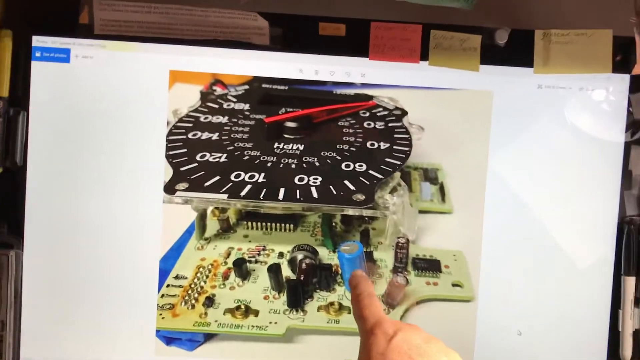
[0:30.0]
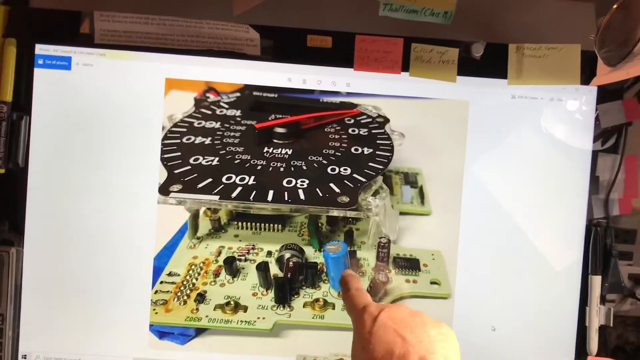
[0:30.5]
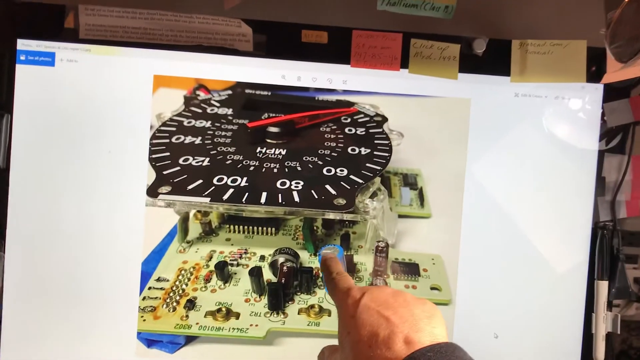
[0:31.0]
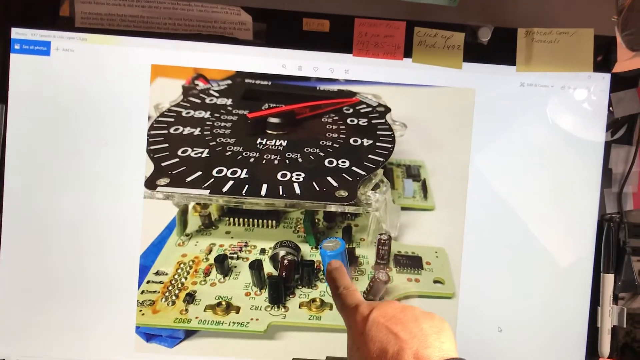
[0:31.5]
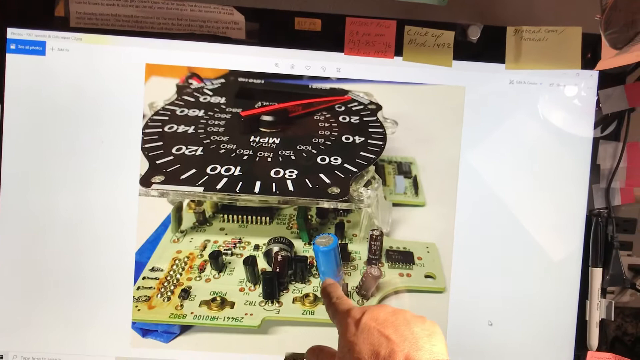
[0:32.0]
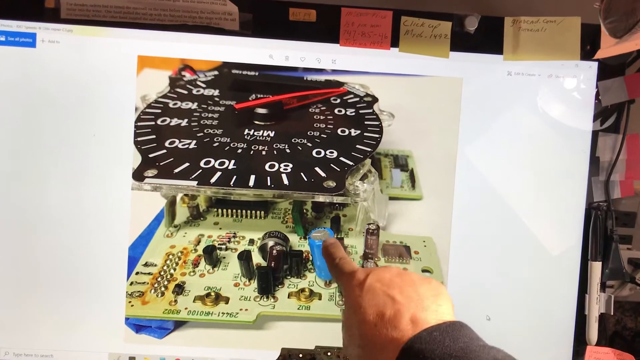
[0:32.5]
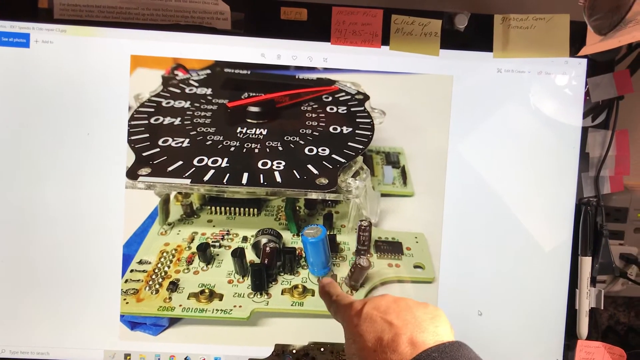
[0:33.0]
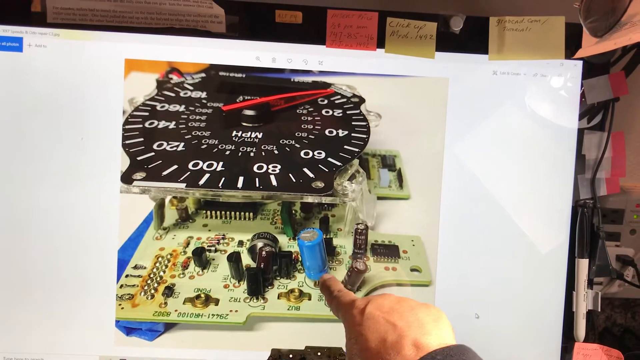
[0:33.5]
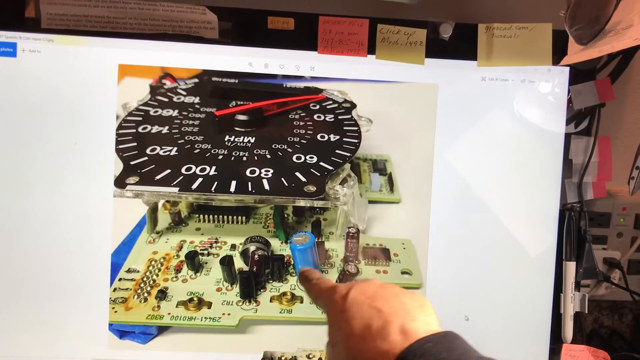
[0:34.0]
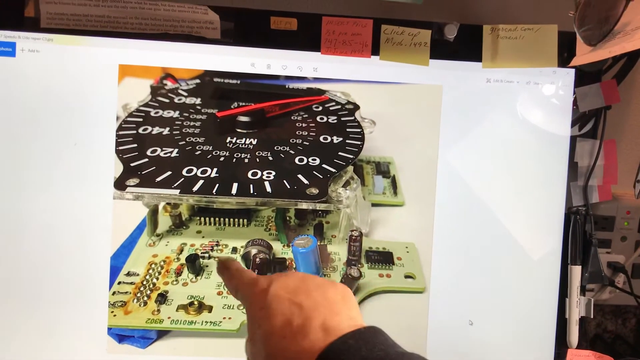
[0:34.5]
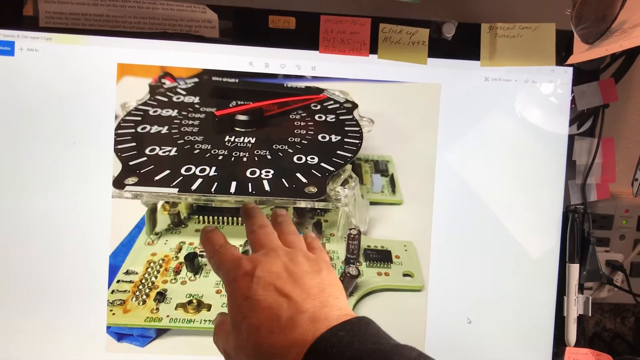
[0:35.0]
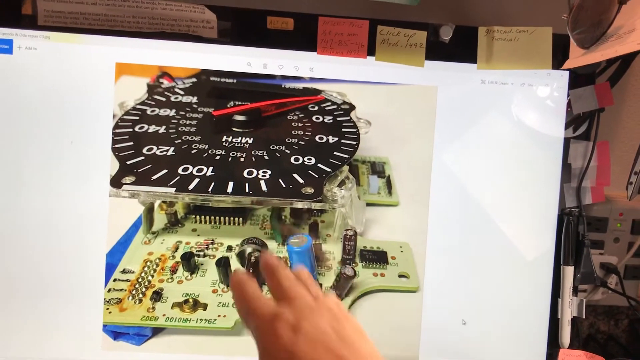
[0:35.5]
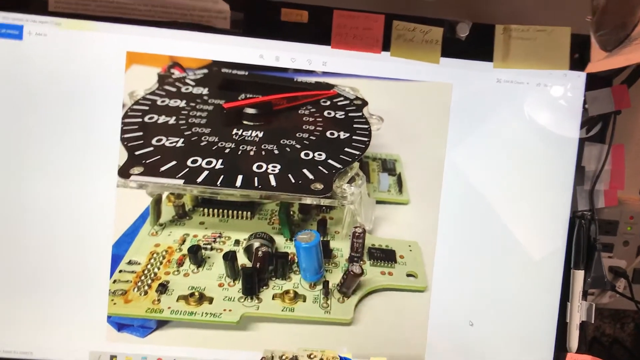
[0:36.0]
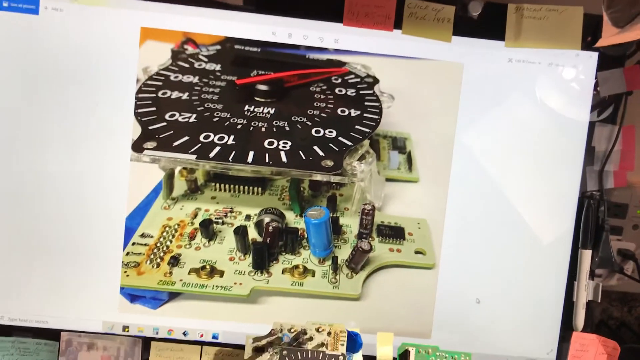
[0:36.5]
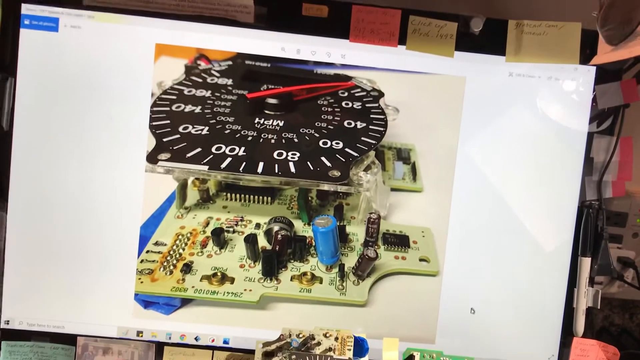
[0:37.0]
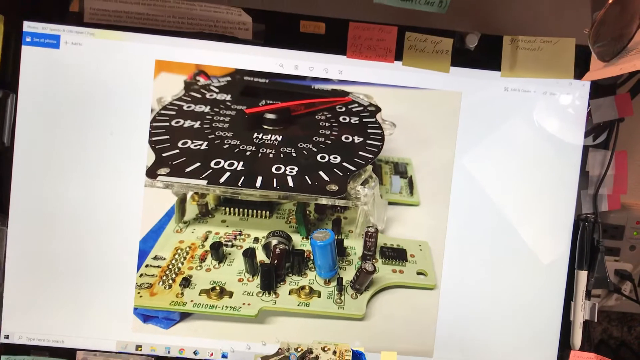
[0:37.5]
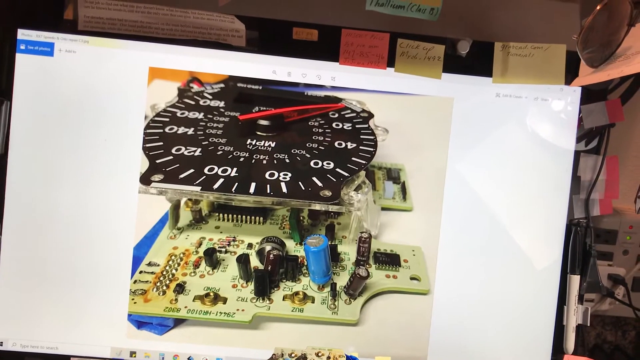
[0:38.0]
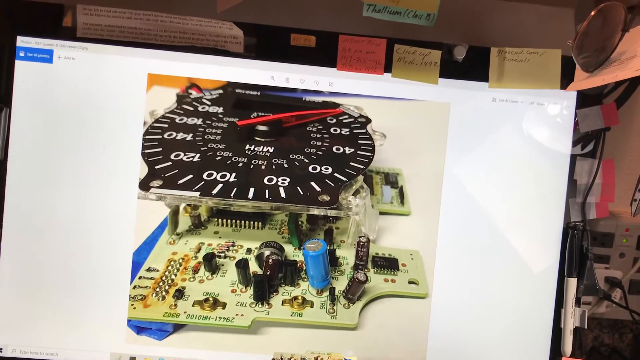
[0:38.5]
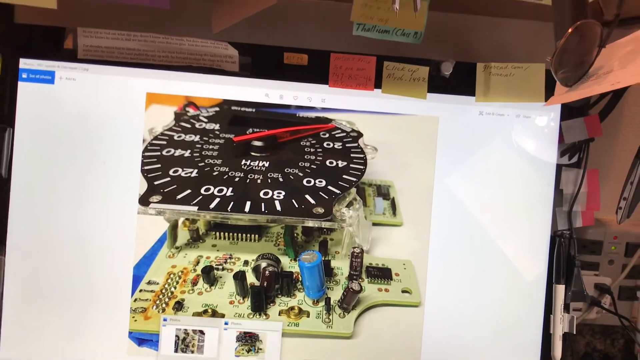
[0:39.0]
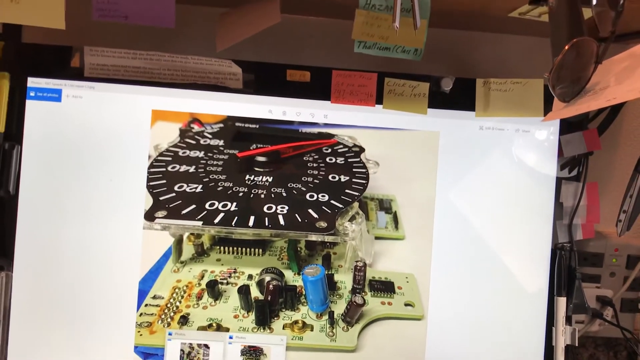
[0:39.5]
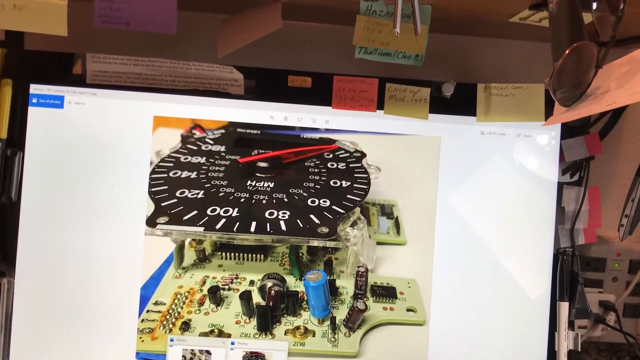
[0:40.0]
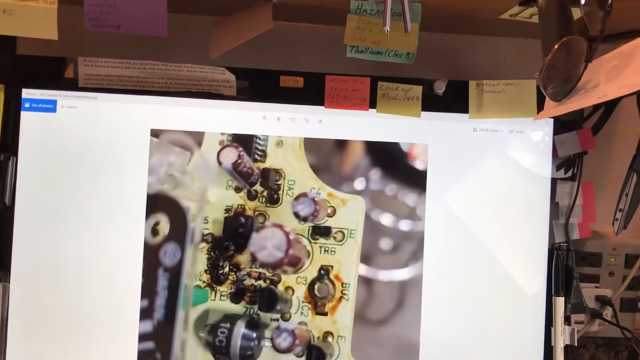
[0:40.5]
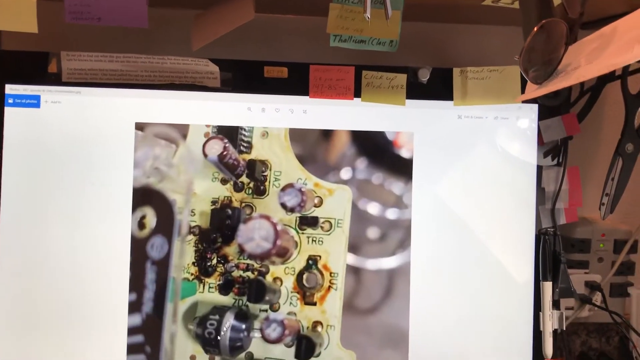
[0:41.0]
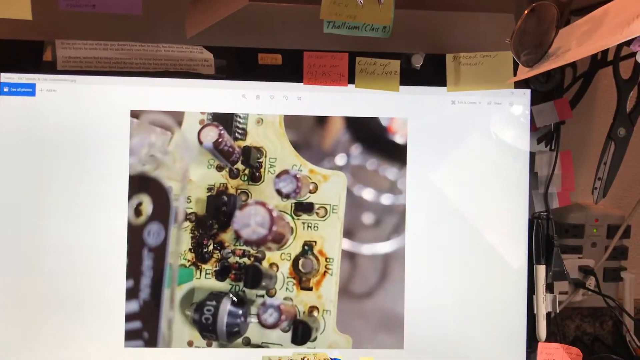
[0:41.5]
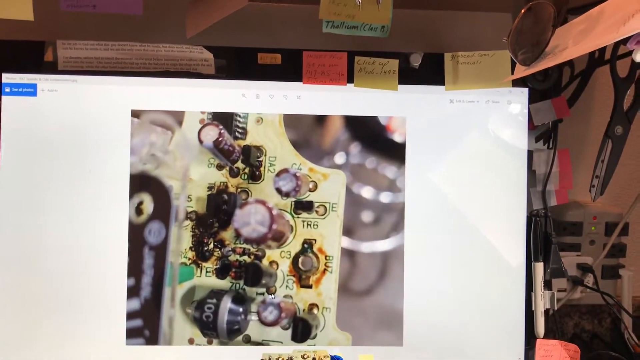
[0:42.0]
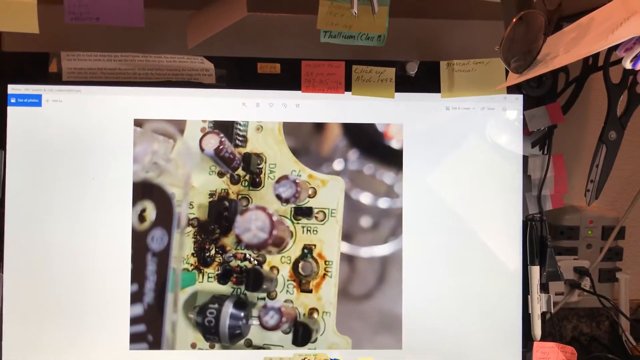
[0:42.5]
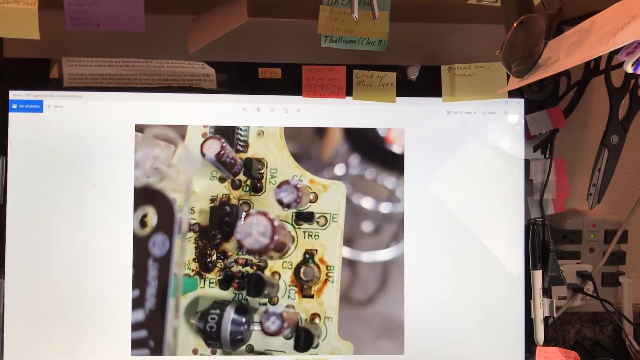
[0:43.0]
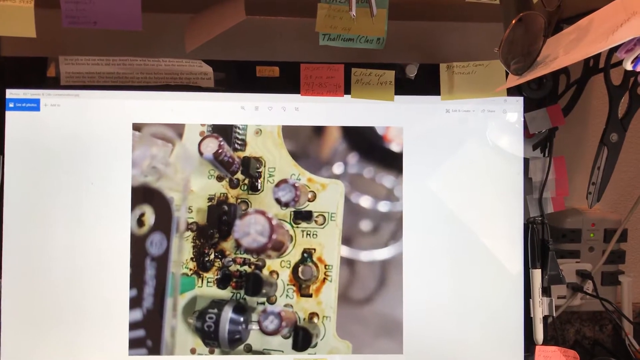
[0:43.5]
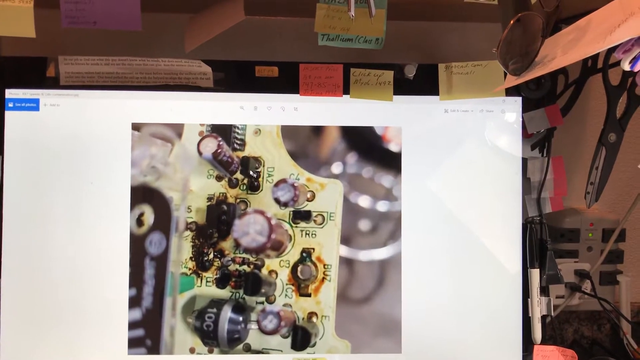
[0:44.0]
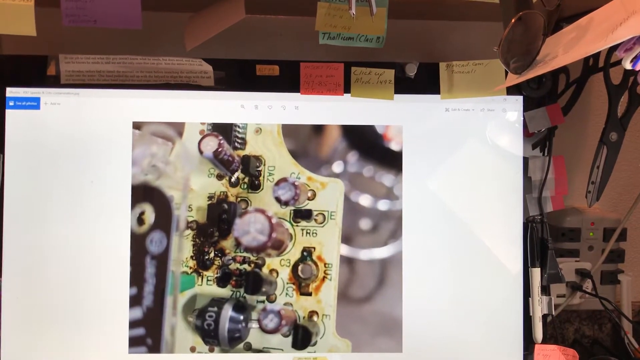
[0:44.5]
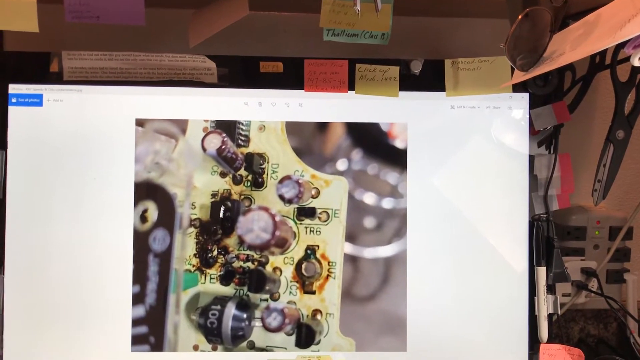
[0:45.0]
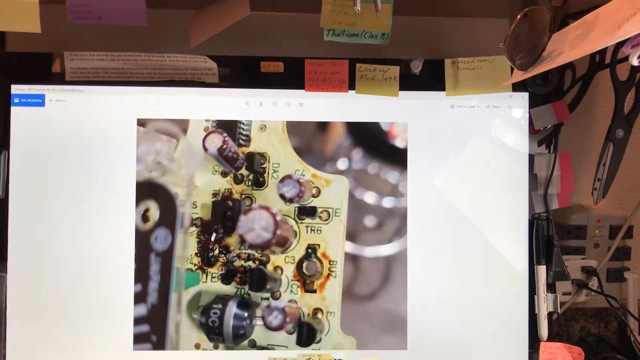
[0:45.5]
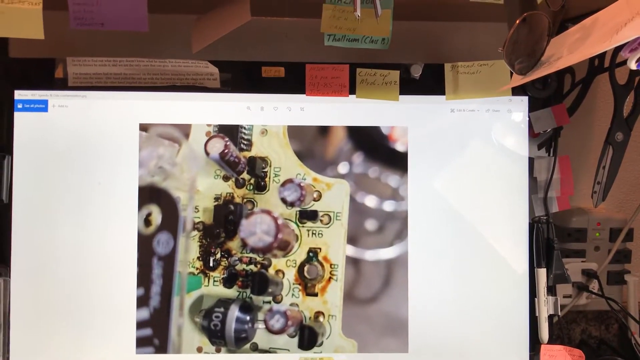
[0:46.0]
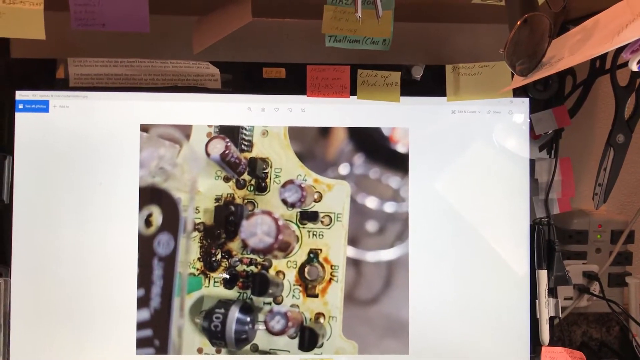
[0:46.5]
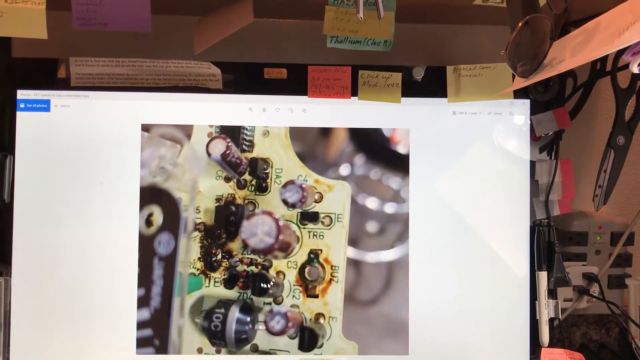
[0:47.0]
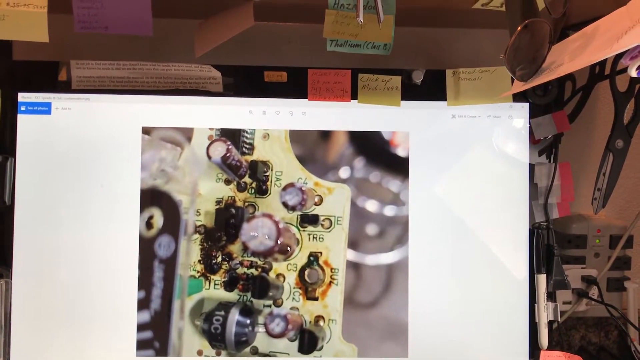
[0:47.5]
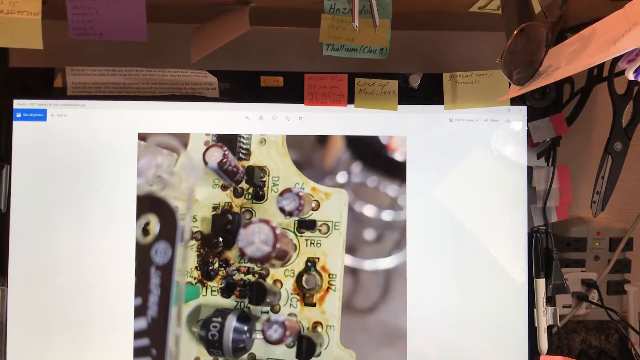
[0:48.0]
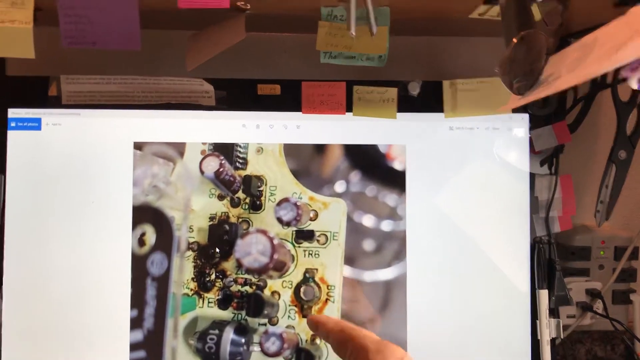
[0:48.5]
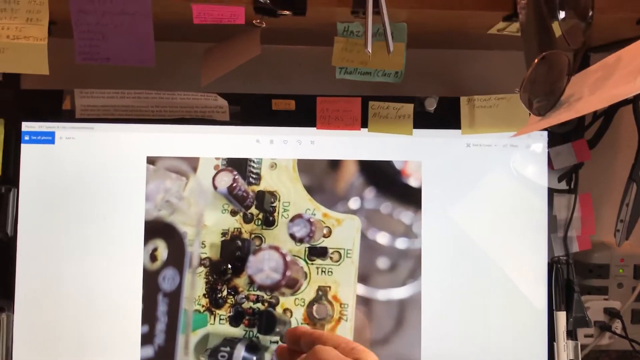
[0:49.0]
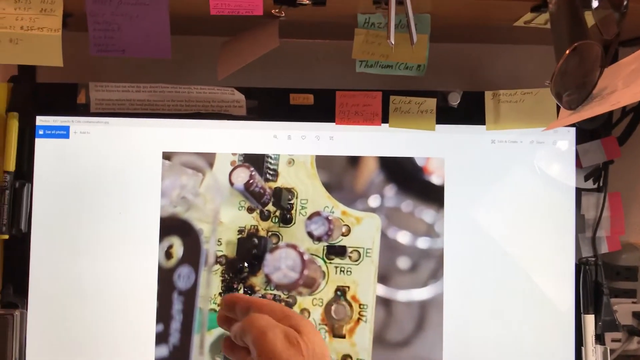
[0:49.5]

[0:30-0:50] The very large monitor shows the speedometer laying on its side with the CPU under it, and then the monitor displays a closer picture of the CPU. At first a man's hand points at the blue thing on the CPU and then waves around. When the image flips to the closer view of the CPU, a circling motion moves over the picture, like a mouse being moved around it. Papers are still all over the monitor. The view moves to the top so the bottom is not visible, then the bottom comes into view again. The scissors hang there, a power cord is in the back, and what looks like a pen or marker hangs on the side.